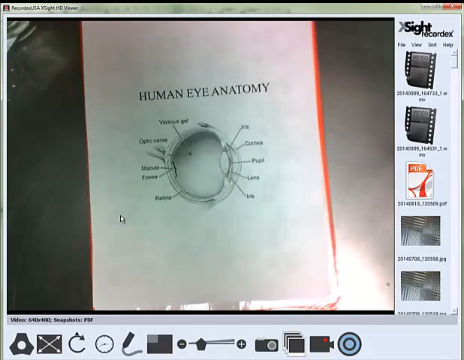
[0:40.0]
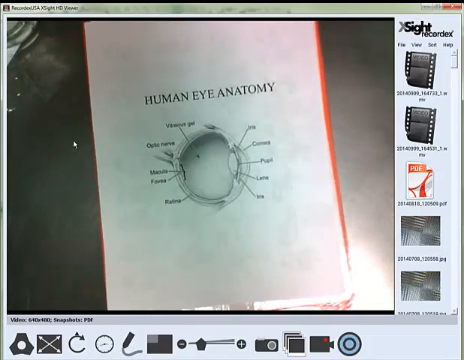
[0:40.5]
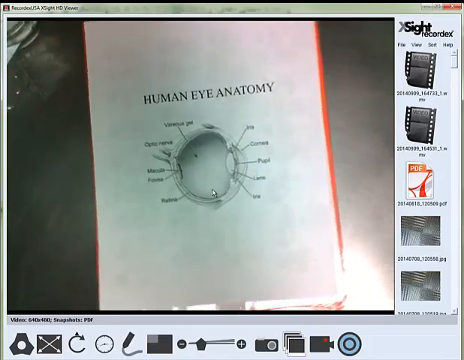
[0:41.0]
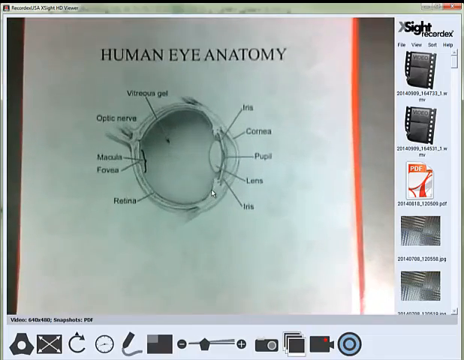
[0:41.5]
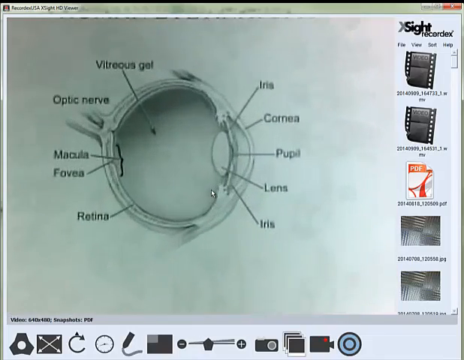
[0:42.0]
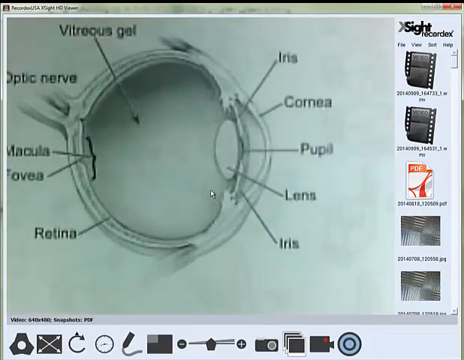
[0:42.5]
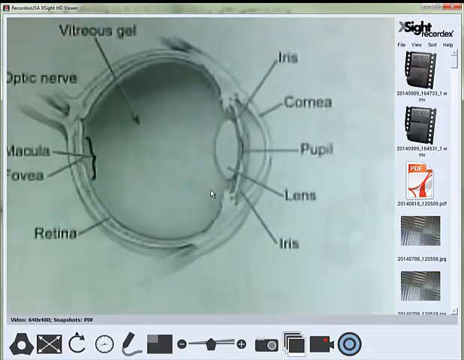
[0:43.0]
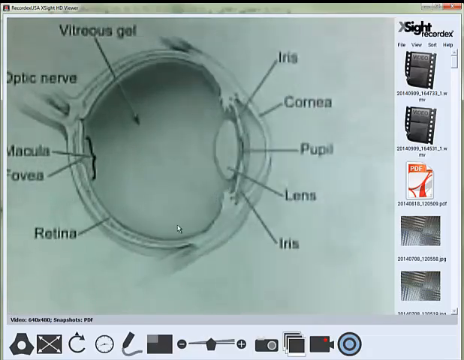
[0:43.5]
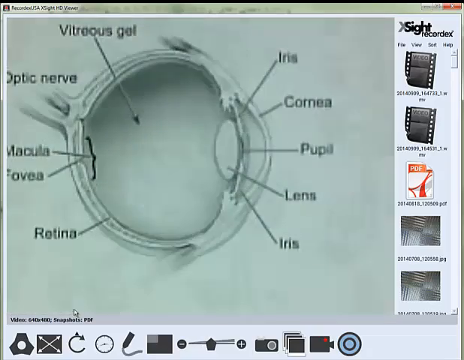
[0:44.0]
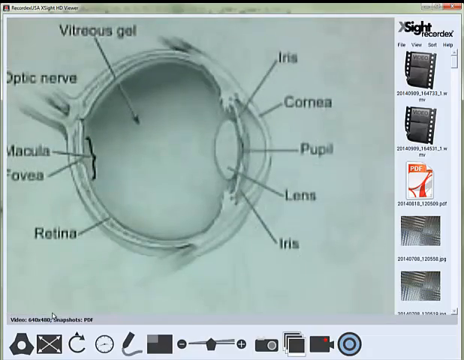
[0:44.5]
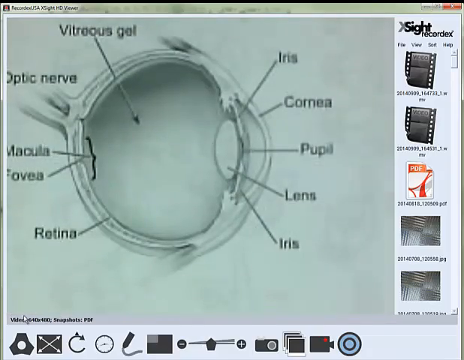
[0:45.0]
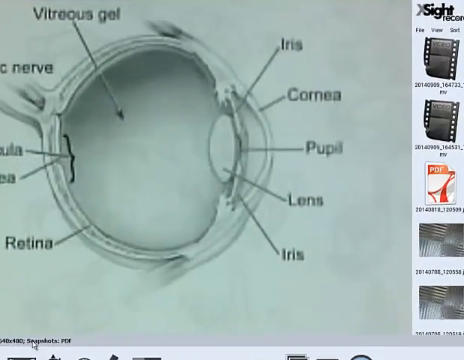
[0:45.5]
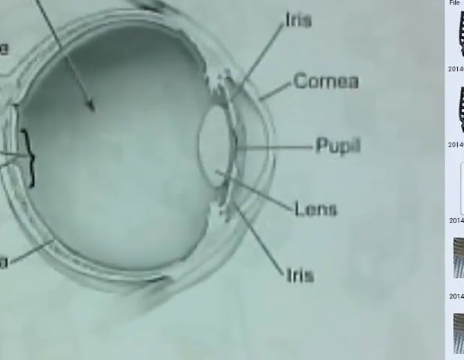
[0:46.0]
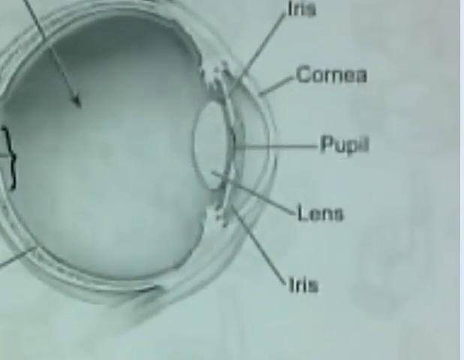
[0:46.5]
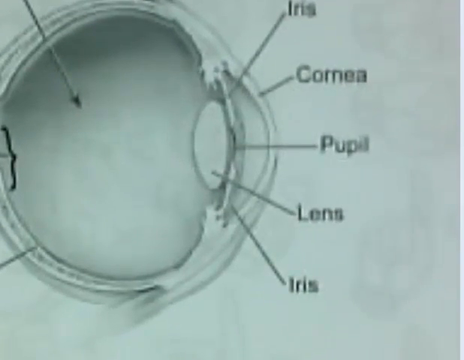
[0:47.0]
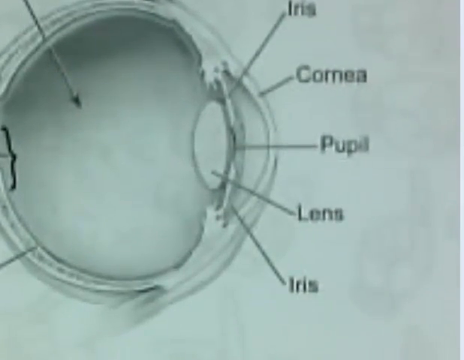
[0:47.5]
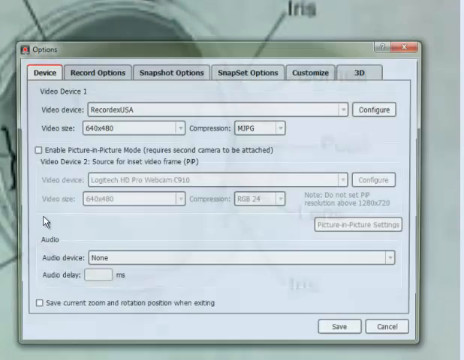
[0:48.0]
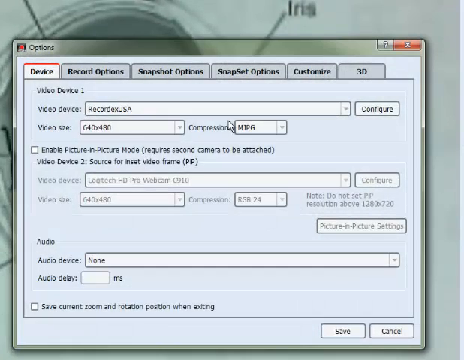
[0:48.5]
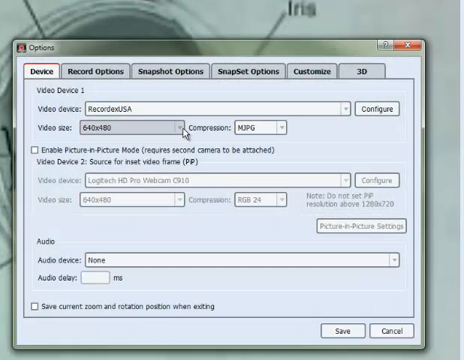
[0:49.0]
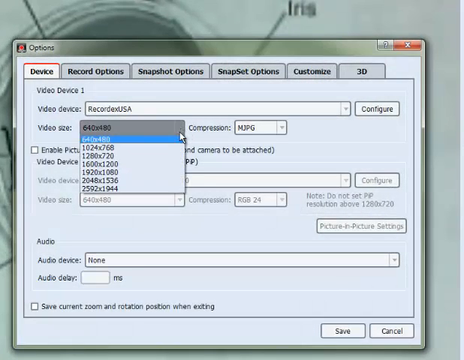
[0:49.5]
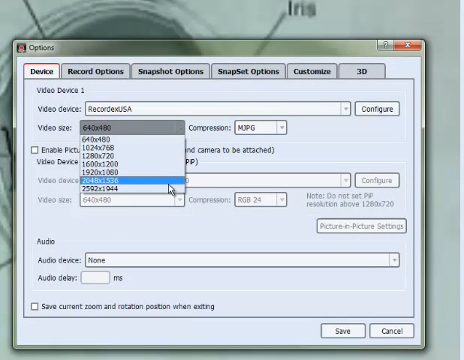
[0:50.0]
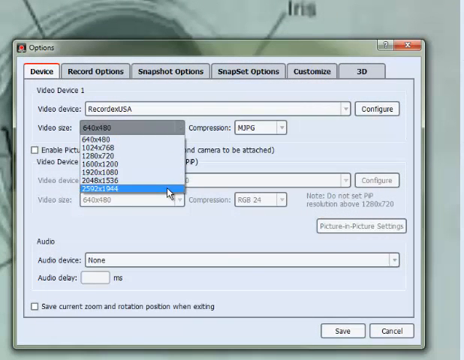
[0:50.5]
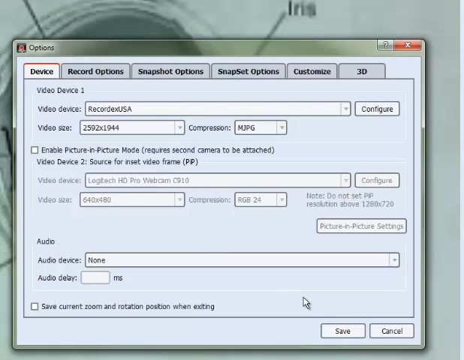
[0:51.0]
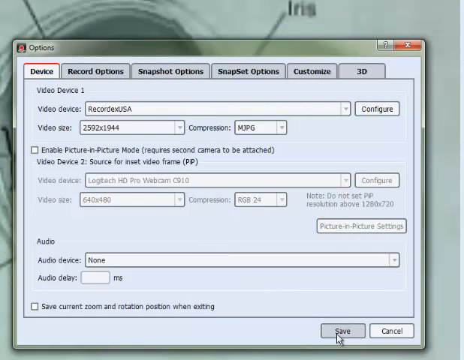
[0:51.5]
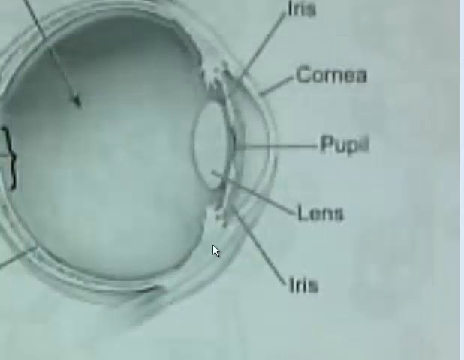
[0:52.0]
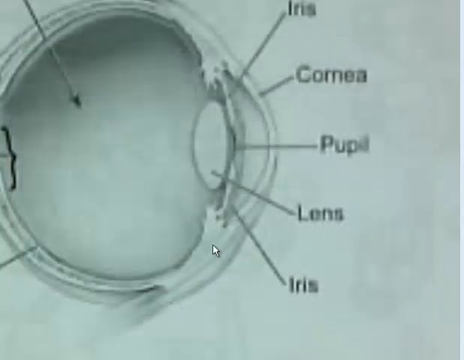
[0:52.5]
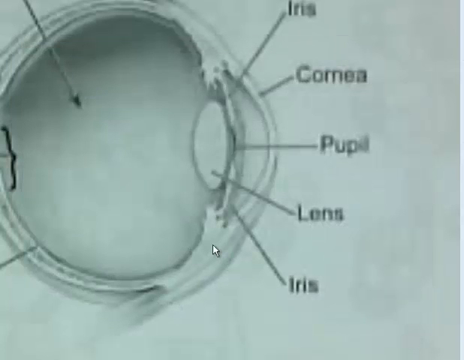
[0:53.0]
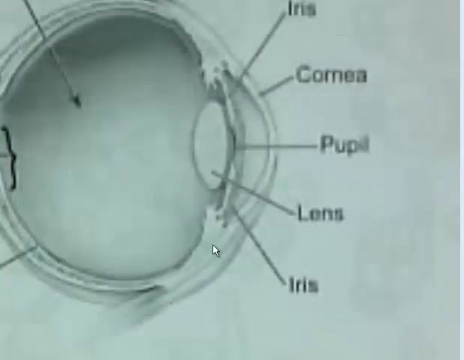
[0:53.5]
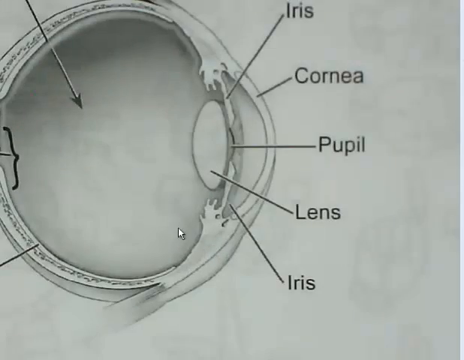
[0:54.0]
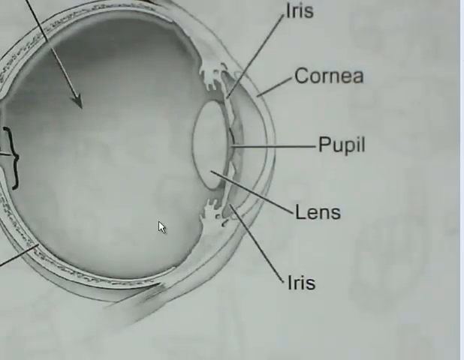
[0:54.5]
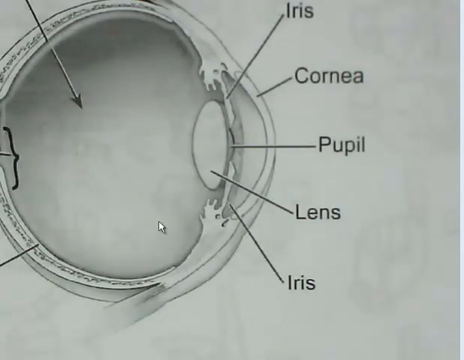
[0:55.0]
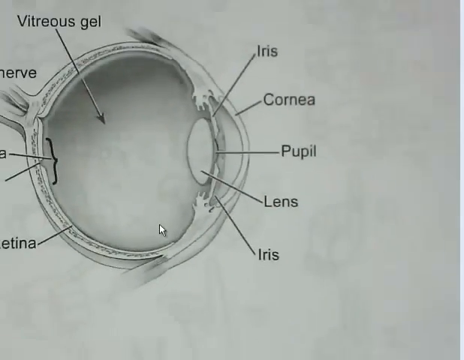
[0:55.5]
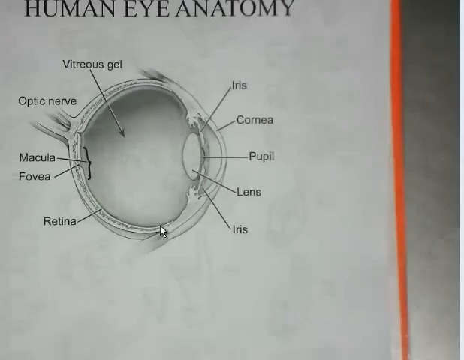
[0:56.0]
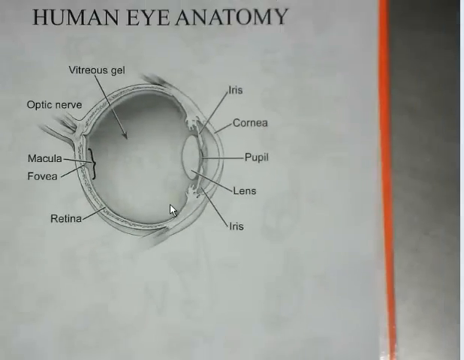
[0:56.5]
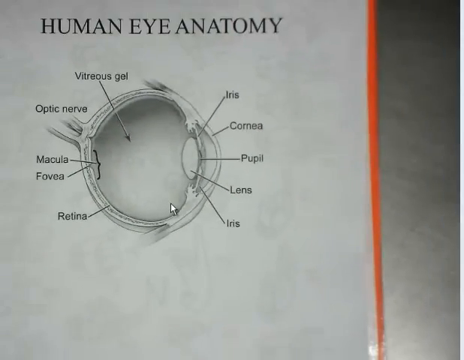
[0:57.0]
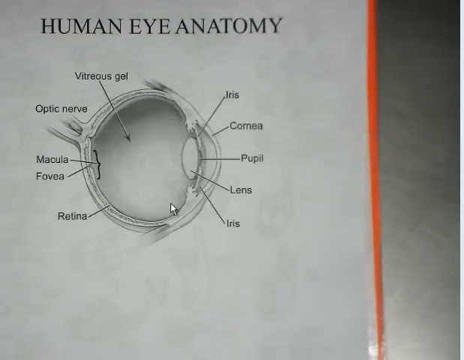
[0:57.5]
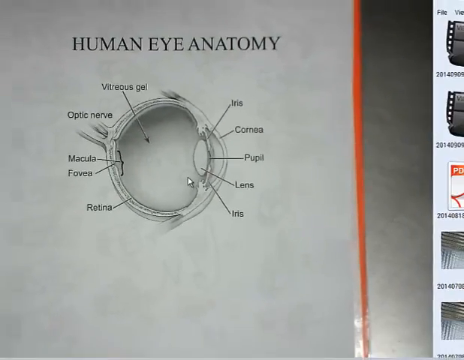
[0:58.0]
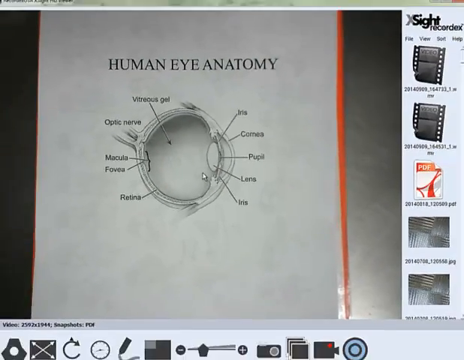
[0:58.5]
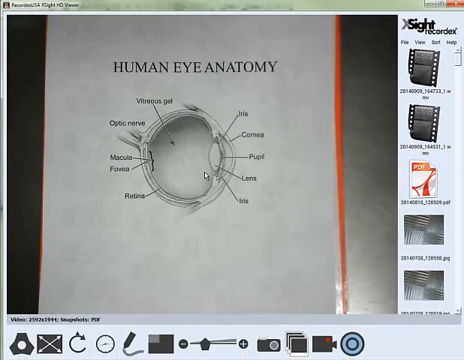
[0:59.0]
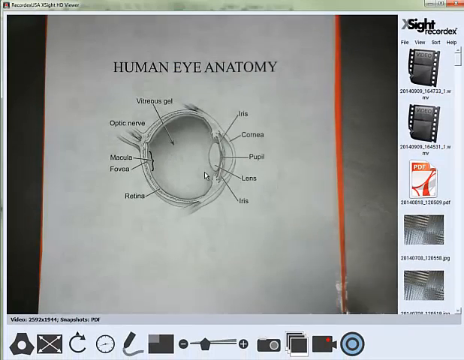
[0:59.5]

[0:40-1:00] A recording shows what appears to be a white book laying on a surface, and it is being zoomed into. Up top it says "human eye anatomy," and below is a drawing of what appears to be a human eye and its workings, with different areas on the eye labeled and defined. The image looks like it is being zoomed into. On the right side there is a white label with different images of what appear to be some film, and up top it says "X Sight Recordex." Another smaller square screen then opens with "options" up top, showing different tabs with options and some boxes that can be filled out to change the different visuals. Someone has an arrow on the screen pointing to different sections as they zoom out.